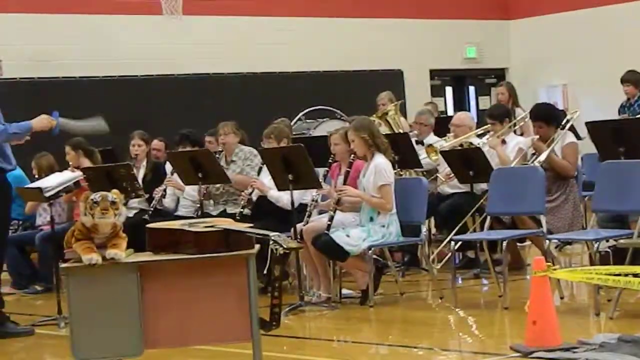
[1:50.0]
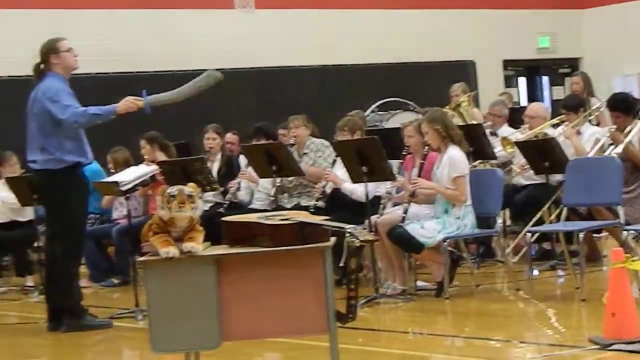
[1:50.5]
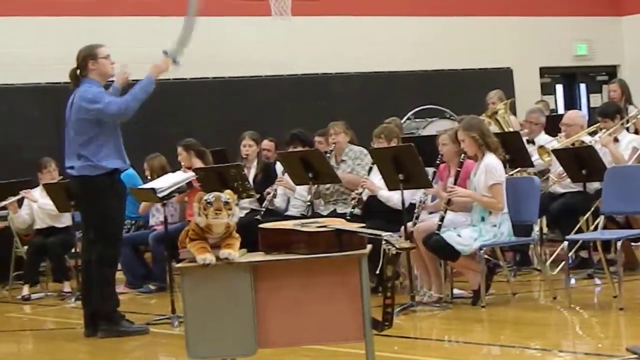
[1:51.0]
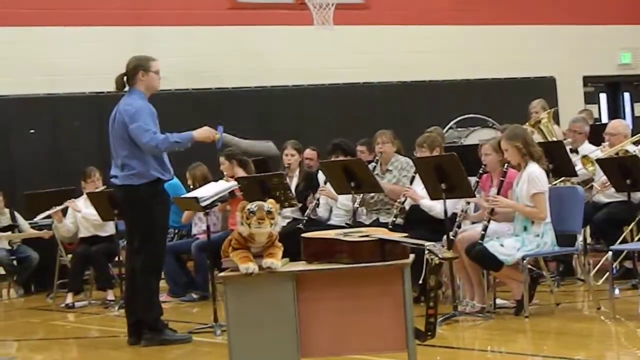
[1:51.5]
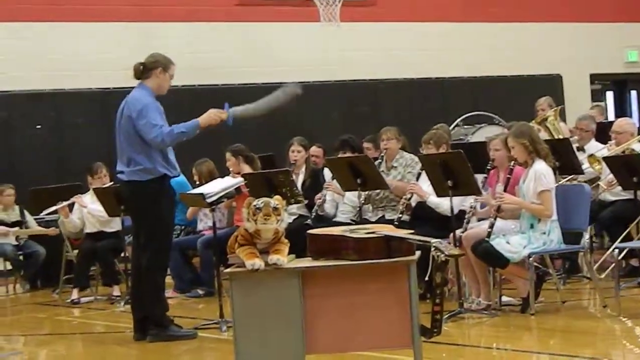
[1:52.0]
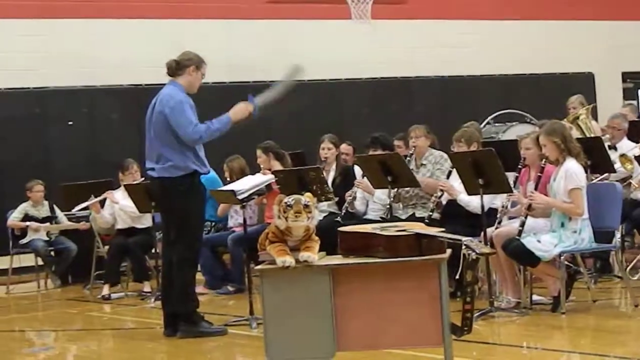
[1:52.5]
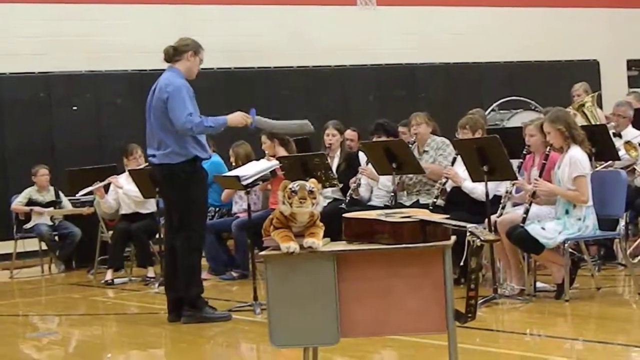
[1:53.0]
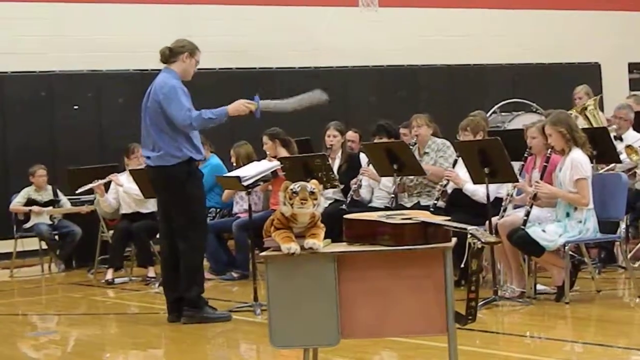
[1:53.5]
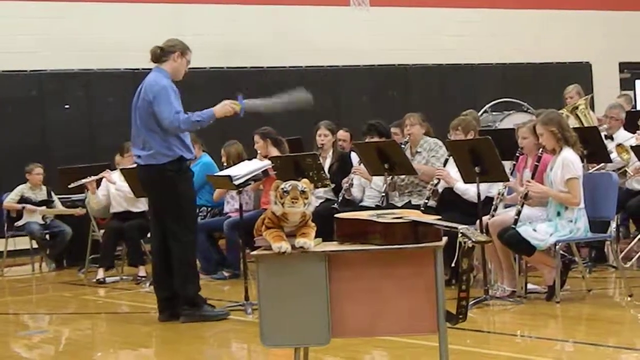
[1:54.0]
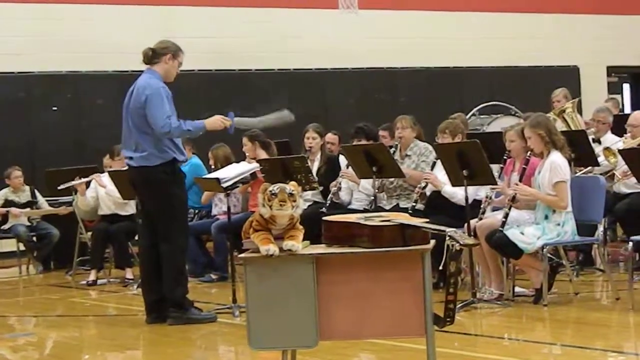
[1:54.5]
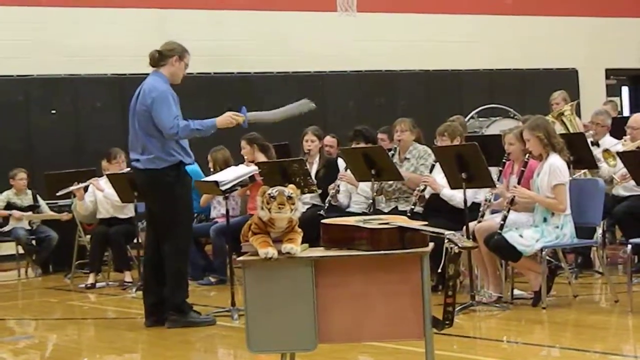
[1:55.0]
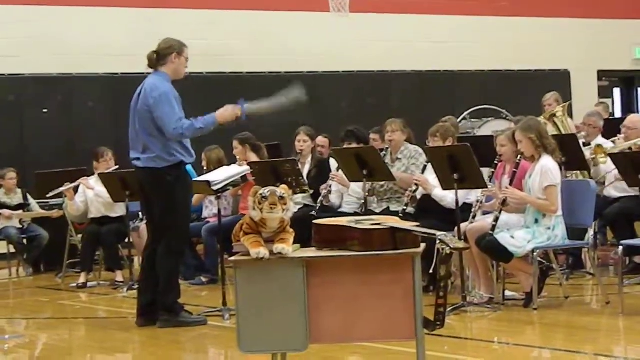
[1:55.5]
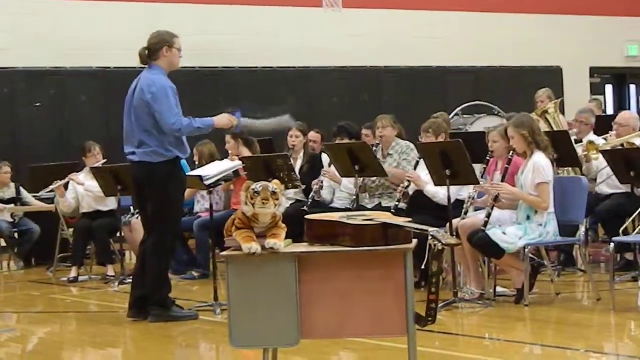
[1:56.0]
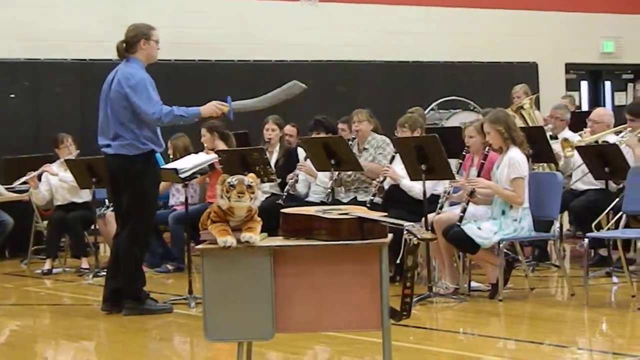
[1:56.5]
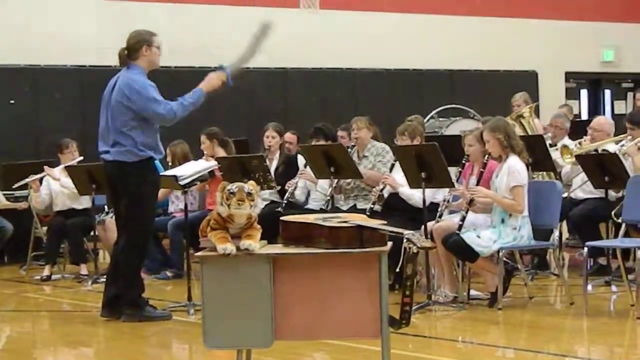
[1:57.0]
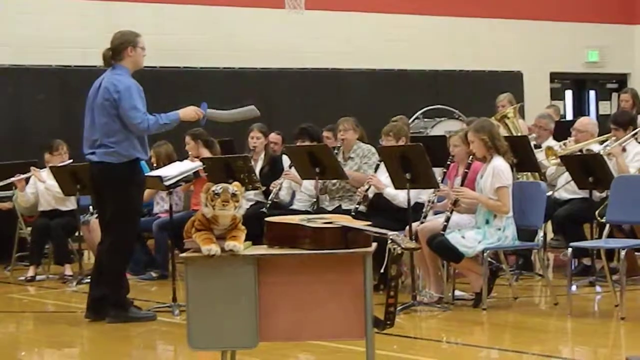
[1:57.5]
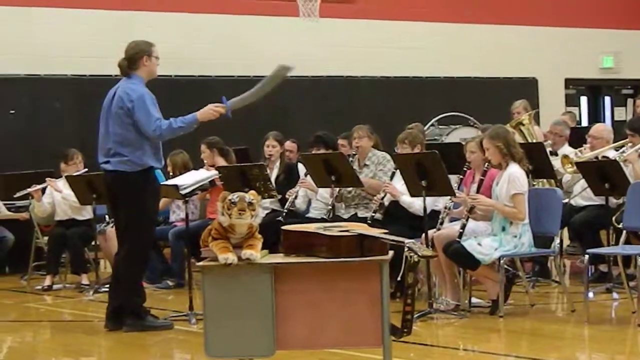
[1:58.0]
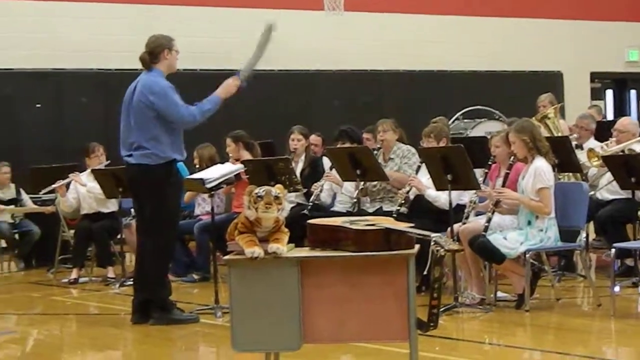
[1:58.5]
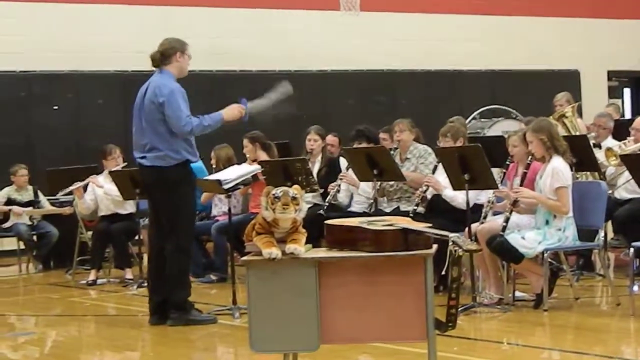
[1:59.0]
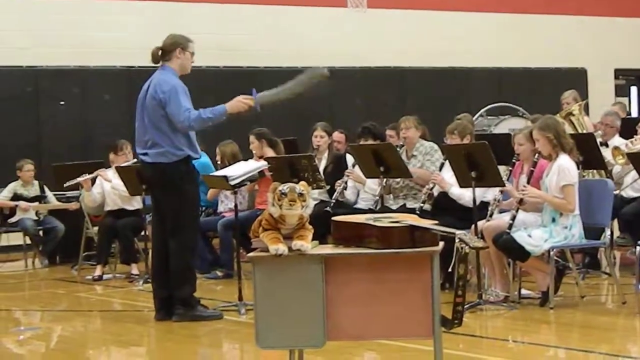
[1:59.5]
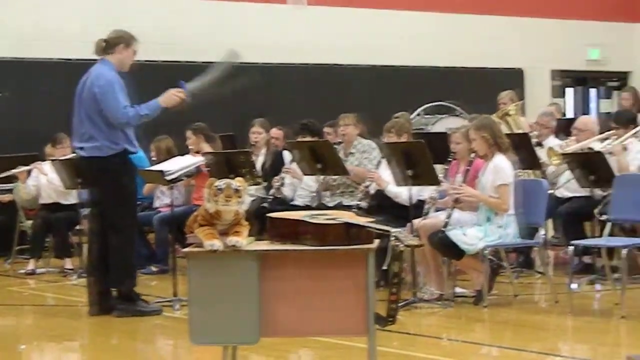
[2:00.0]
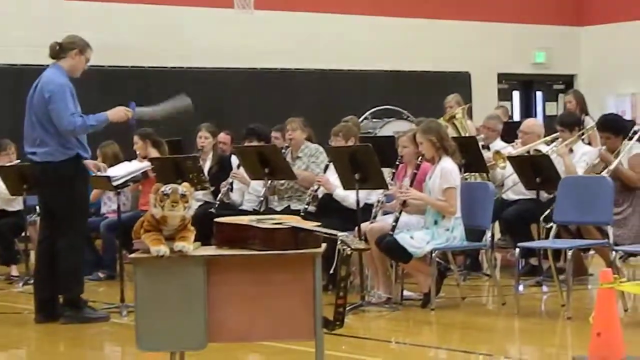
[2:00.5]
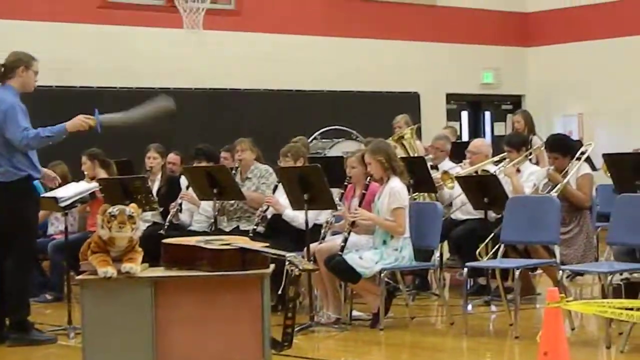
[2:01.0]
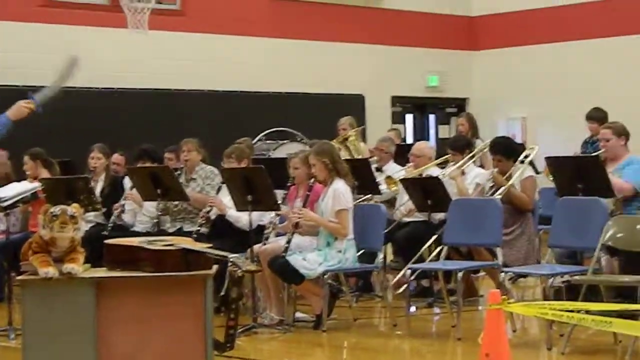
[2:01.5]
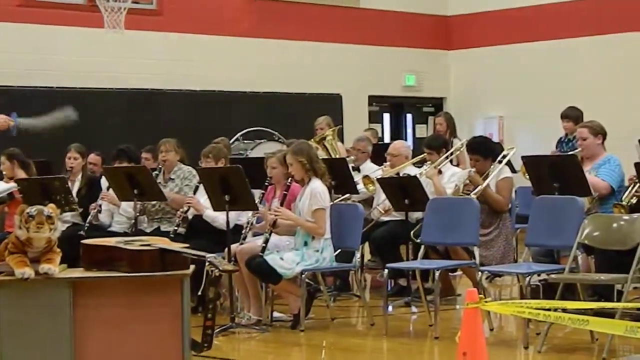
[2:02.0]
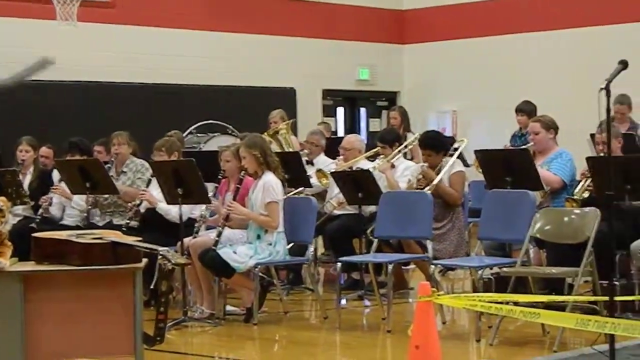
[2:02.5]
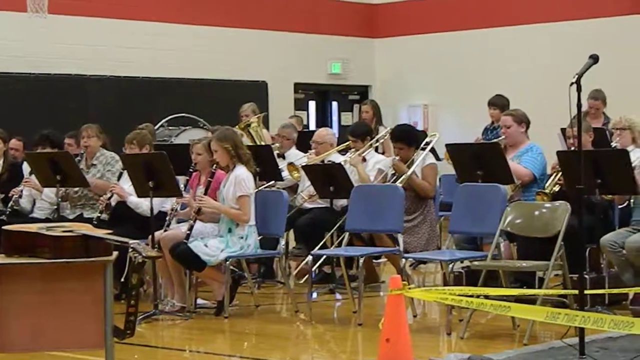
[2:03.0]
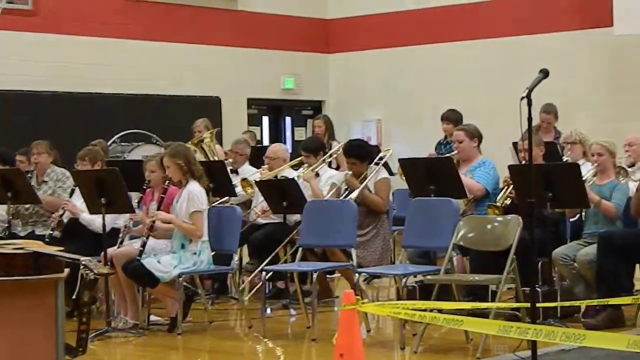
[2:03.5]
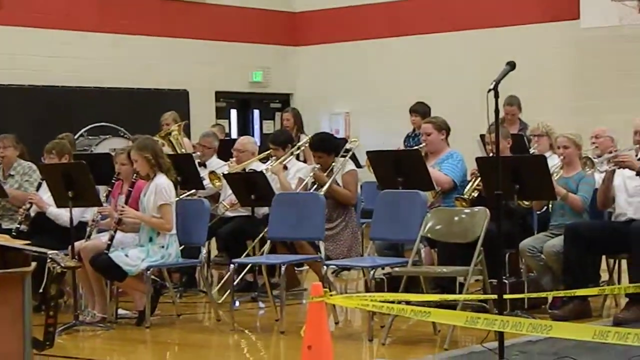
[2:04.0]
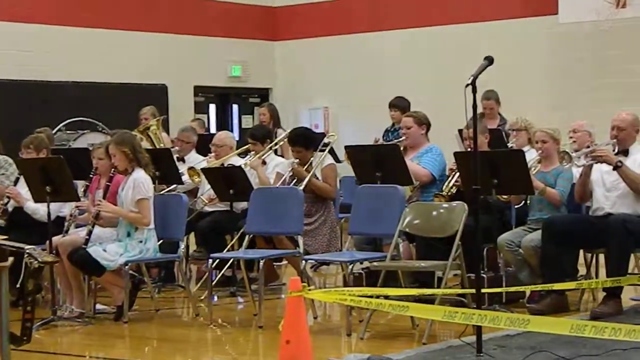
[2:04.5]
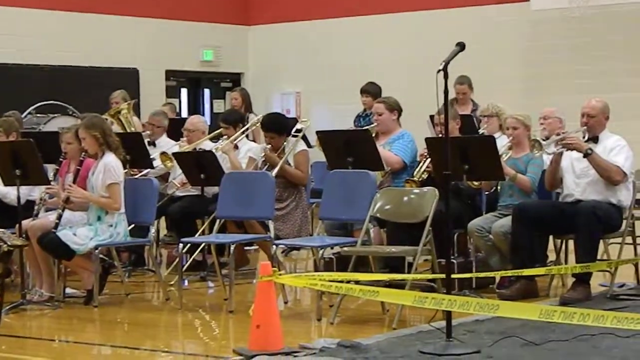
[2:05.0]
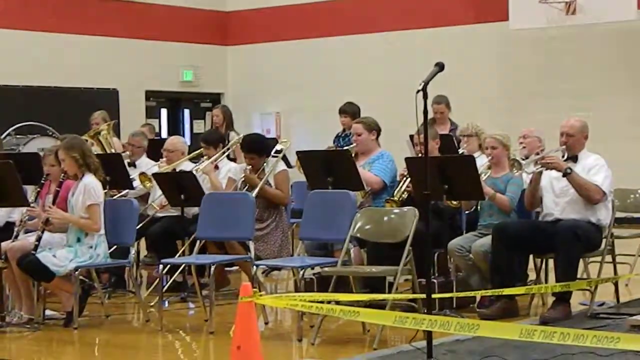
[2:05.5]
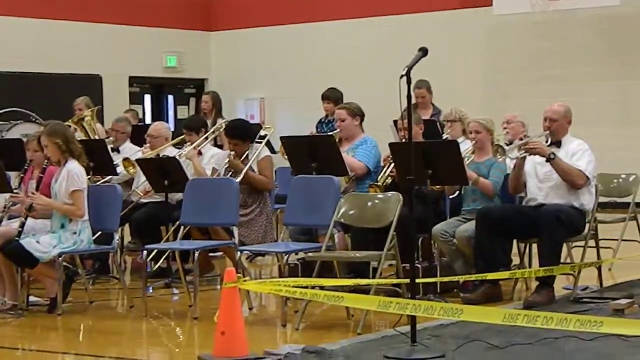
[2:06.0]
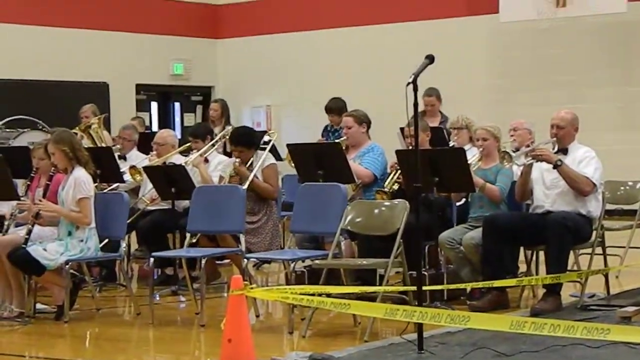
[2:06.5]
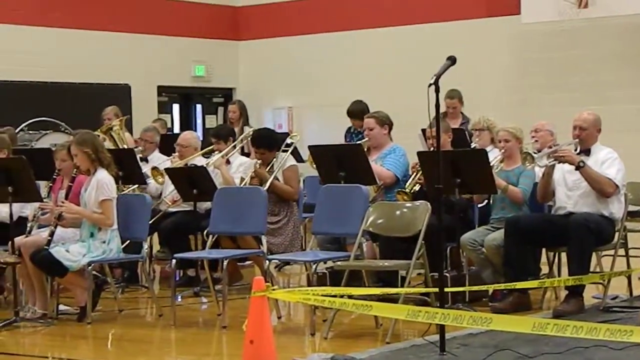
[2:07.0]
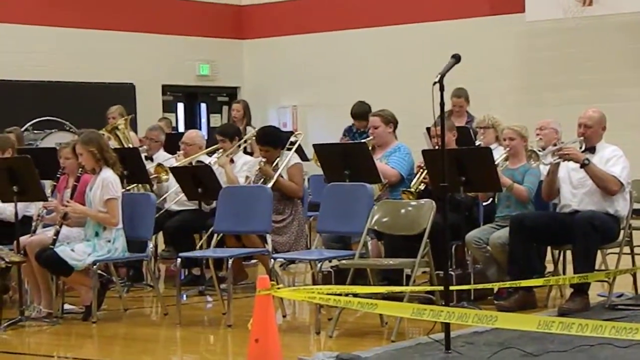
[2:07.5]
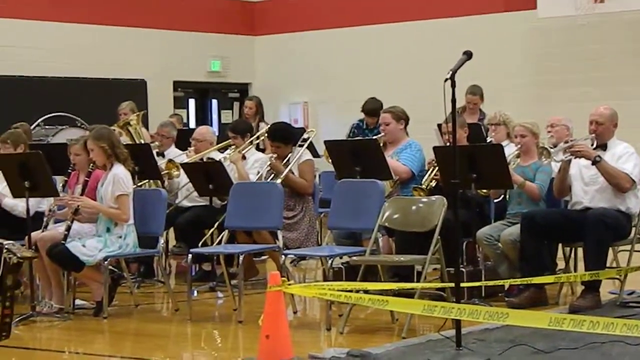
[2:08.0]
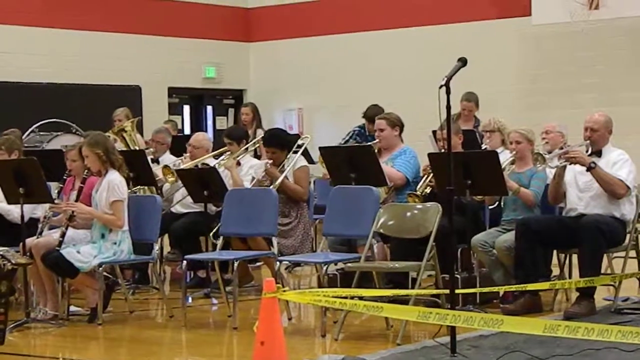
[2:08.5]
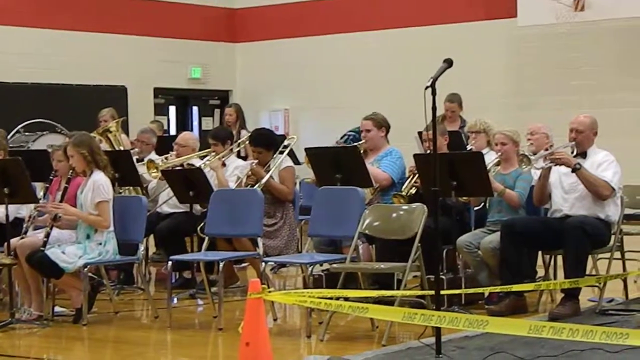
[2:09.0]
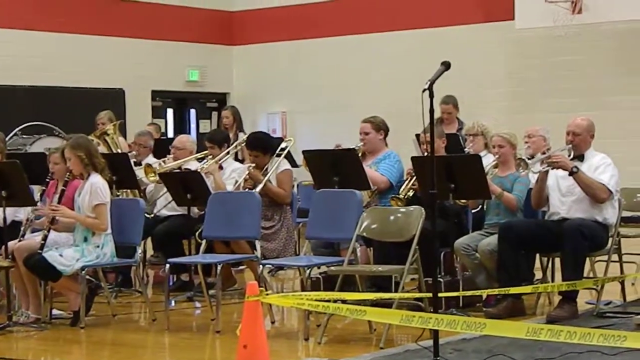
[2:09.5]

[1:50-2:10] A man in a long-sleeved blue shirt and black pants continues conducting what looks like a school or amateur band seated in what looks like a school gymnasium. He holds a toy plastic sword in his right hand as a conductor's baton, gesturing up and down with it. The camera pans to show all the band members, all seated behind music stands. In the back, members play brass instruments like horns; in the front, players play clarinets and flutes. There is one guitar player on the left. In the very back some performers are standing; one of them has cymbals, and there appears to be a large drum on the left side. Basketball hoops are on two of the gymnasium walls, and black padding runs along one of the walls. In the corner of the room behind the players is a set of double doors with an exit sign over them. The walls are painted yellow with a red stripe at the top, and the floor is shiny and light brown. Most of the players' seats are blue, but there are some metal chairs as well.